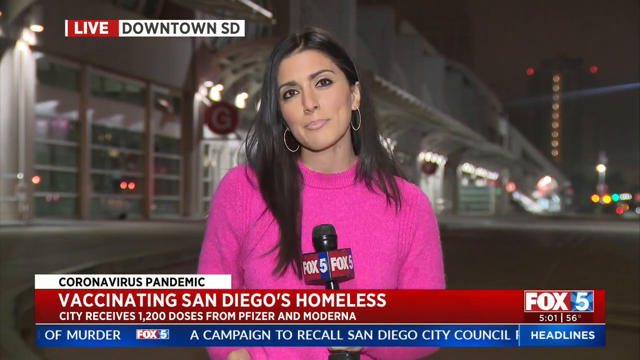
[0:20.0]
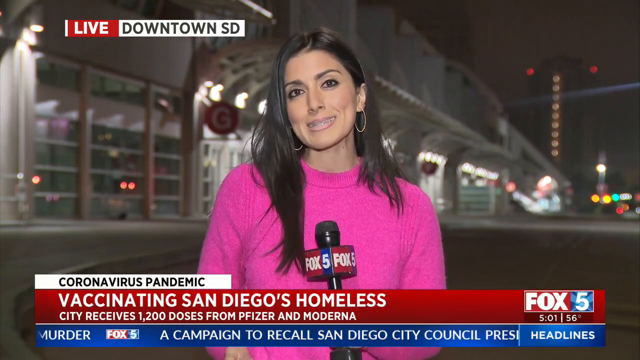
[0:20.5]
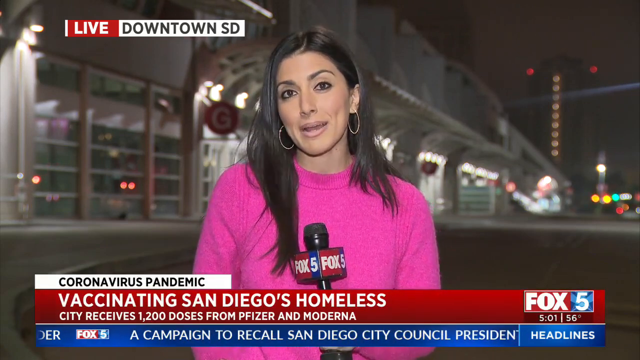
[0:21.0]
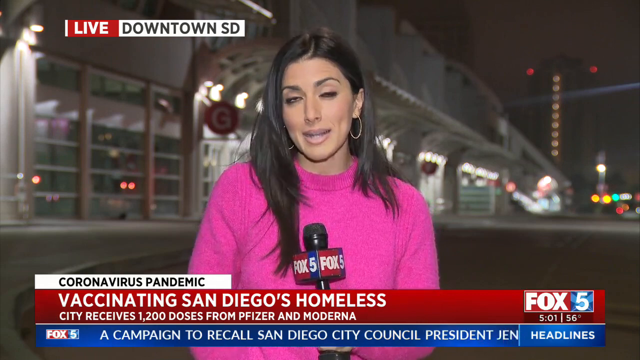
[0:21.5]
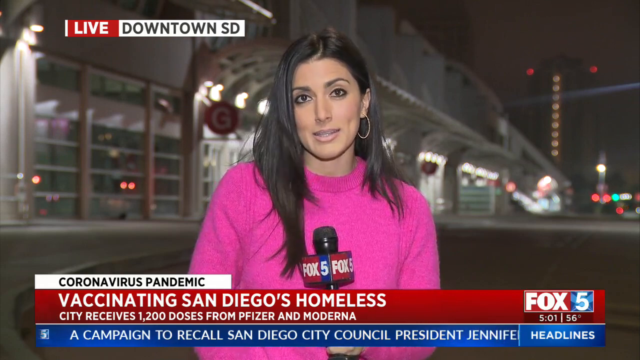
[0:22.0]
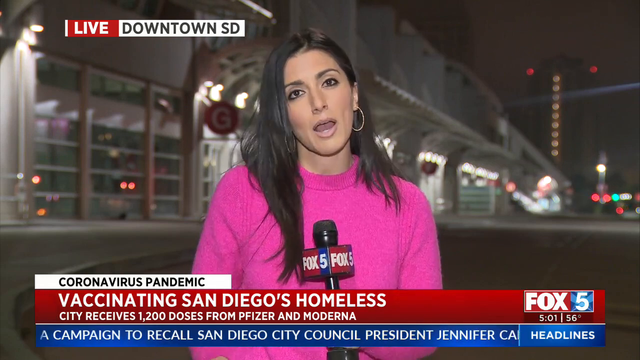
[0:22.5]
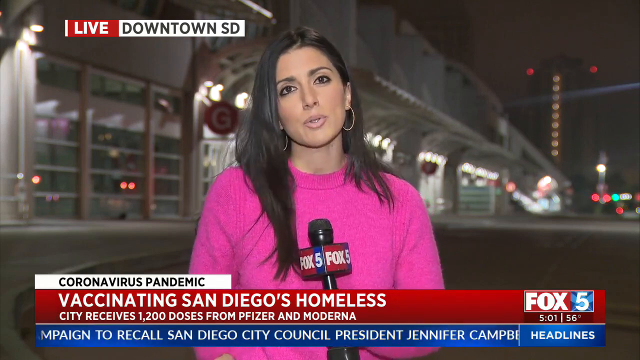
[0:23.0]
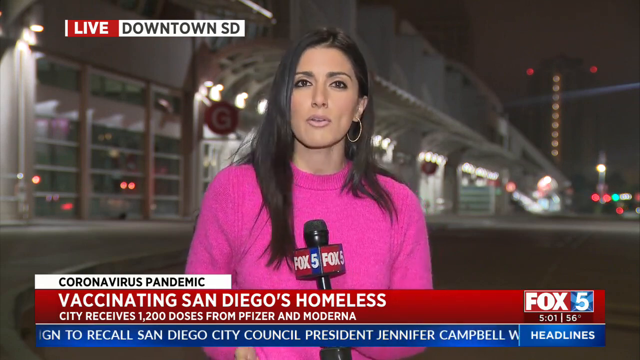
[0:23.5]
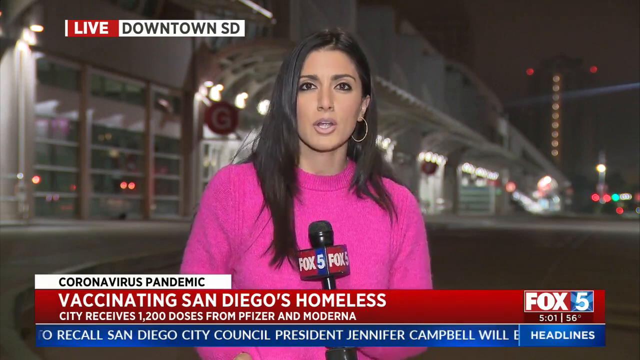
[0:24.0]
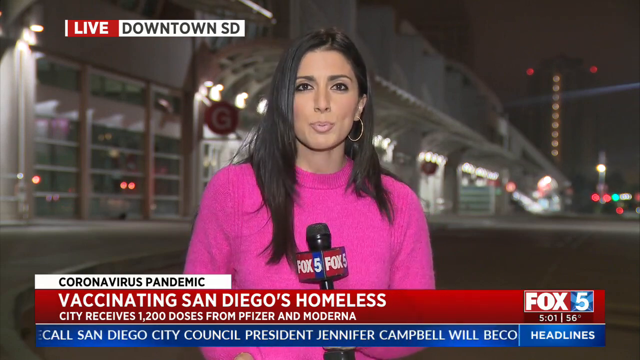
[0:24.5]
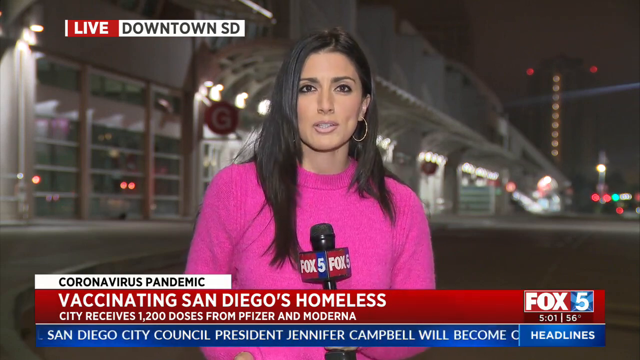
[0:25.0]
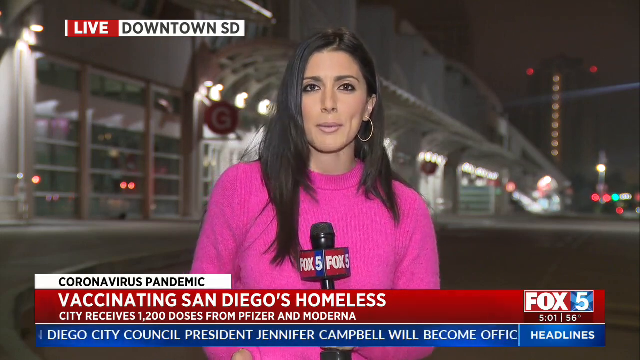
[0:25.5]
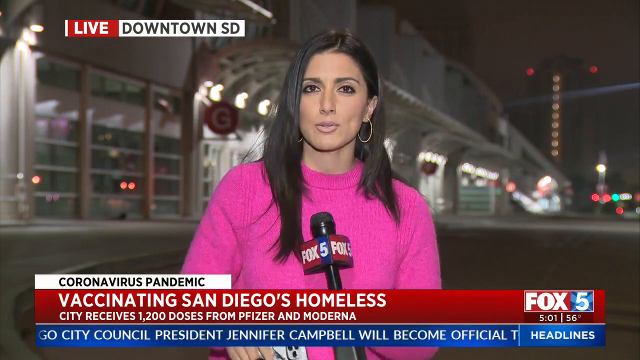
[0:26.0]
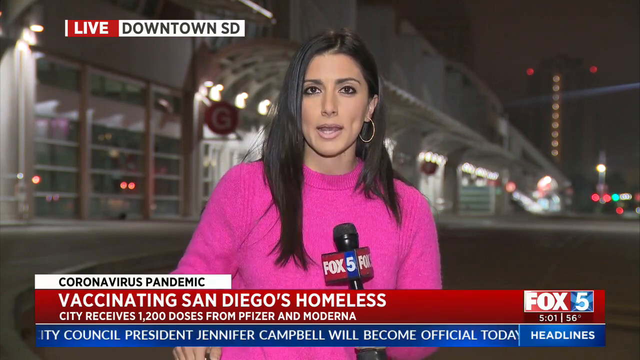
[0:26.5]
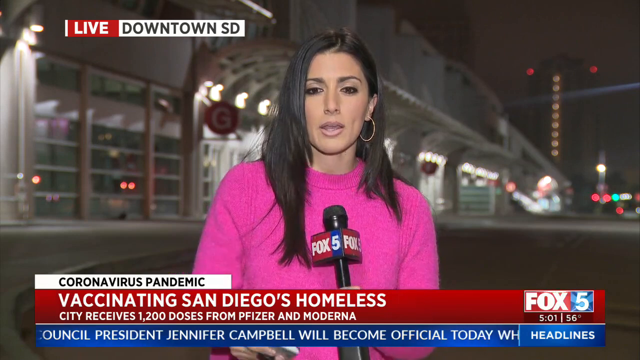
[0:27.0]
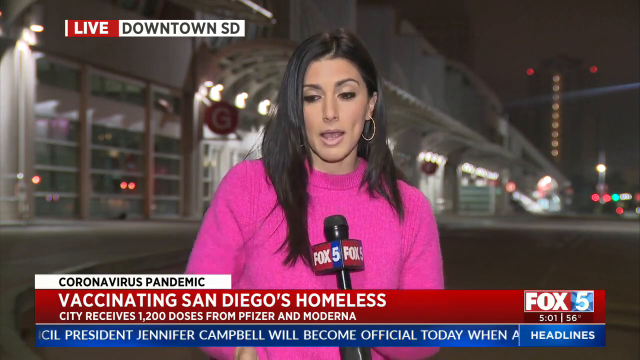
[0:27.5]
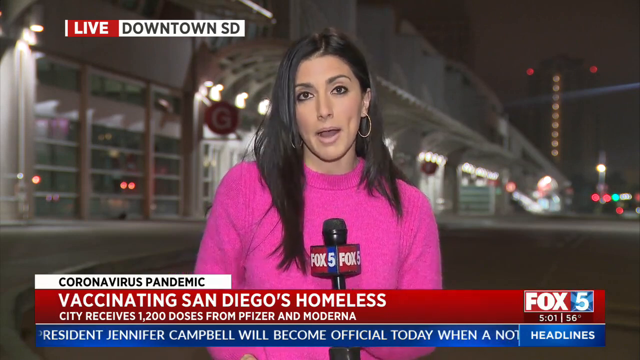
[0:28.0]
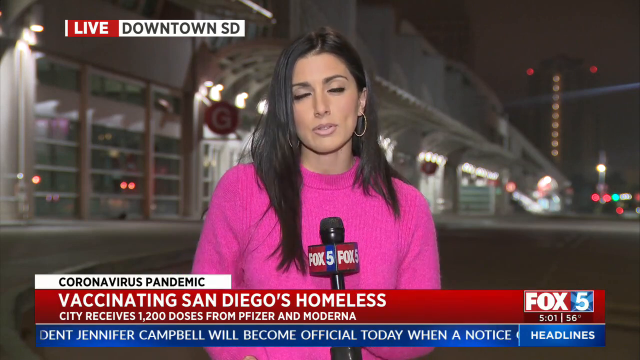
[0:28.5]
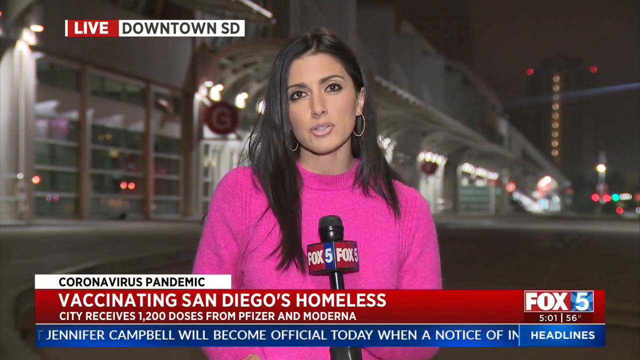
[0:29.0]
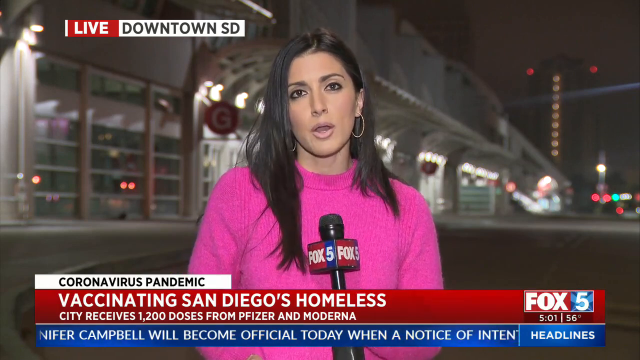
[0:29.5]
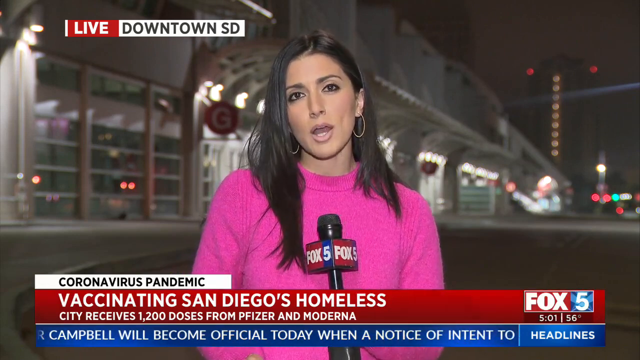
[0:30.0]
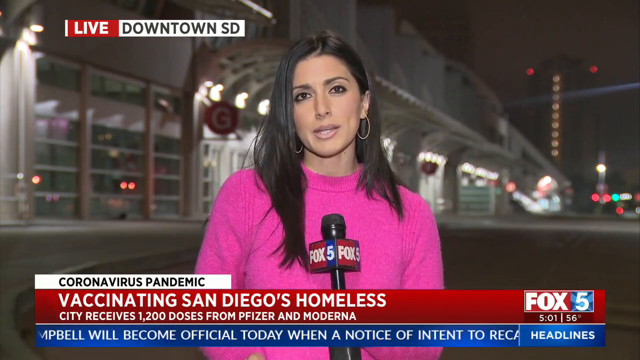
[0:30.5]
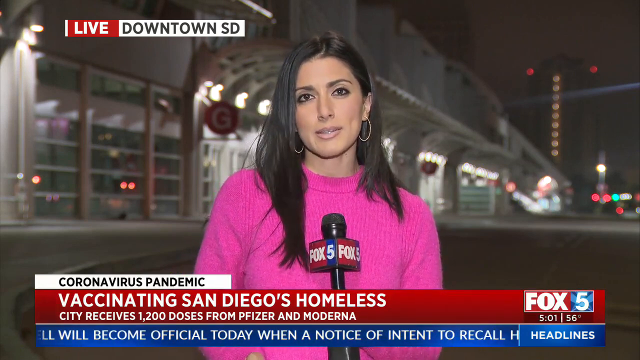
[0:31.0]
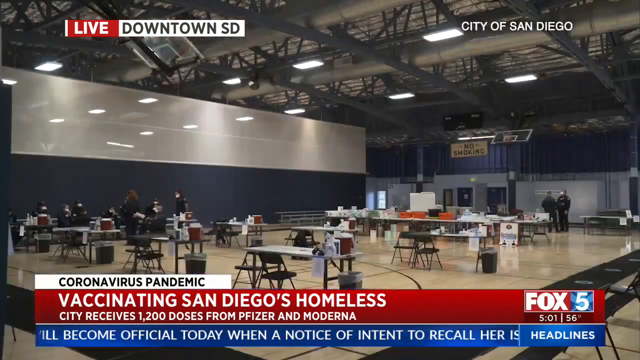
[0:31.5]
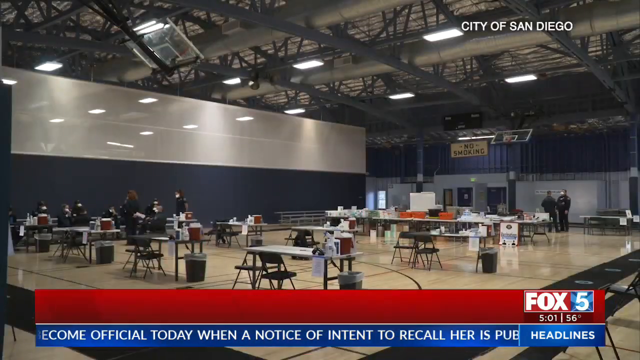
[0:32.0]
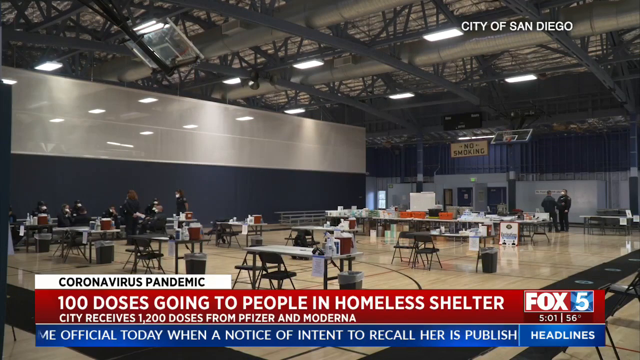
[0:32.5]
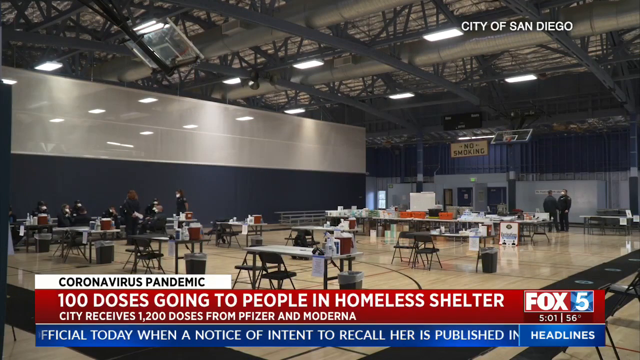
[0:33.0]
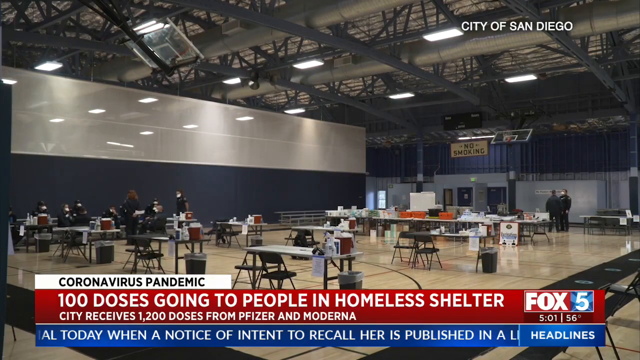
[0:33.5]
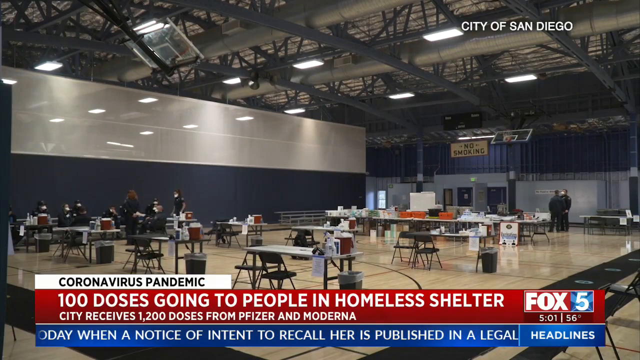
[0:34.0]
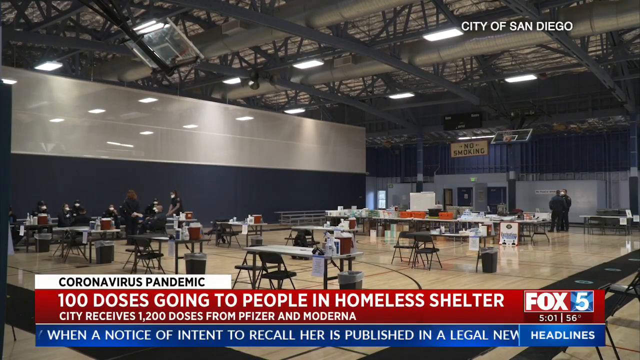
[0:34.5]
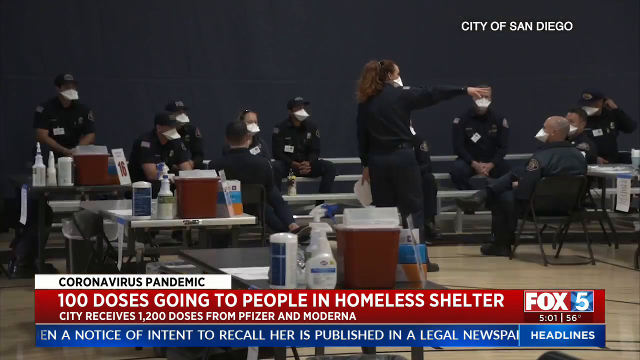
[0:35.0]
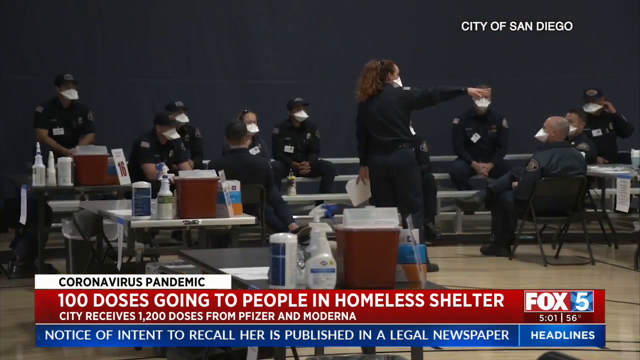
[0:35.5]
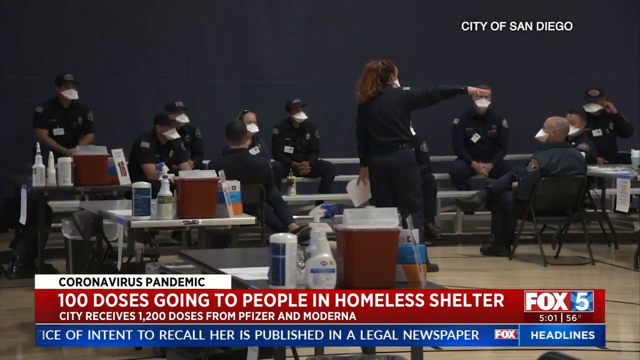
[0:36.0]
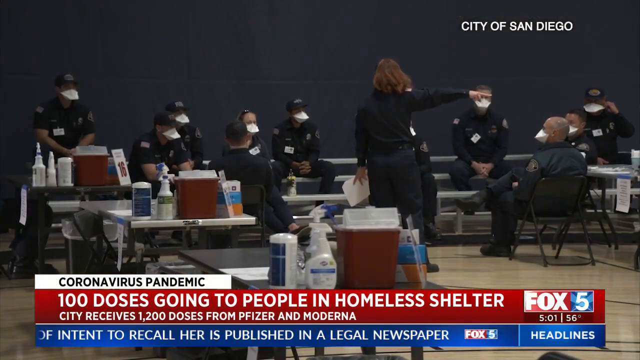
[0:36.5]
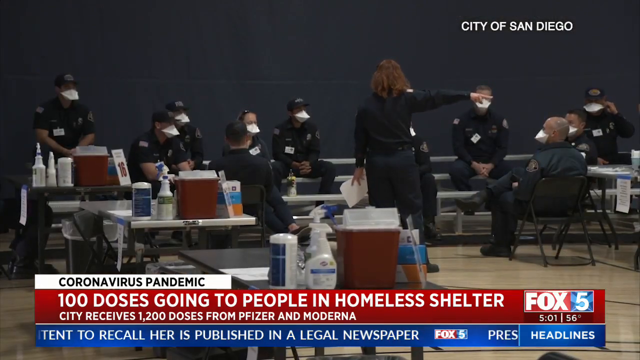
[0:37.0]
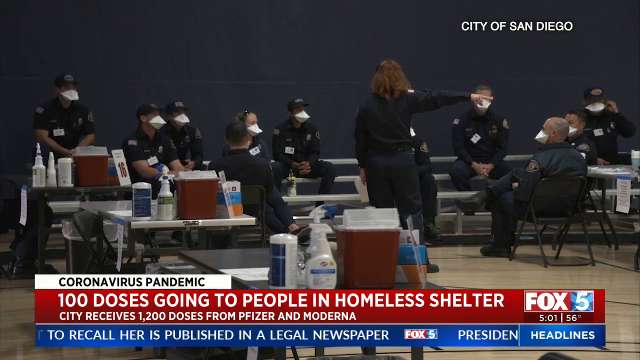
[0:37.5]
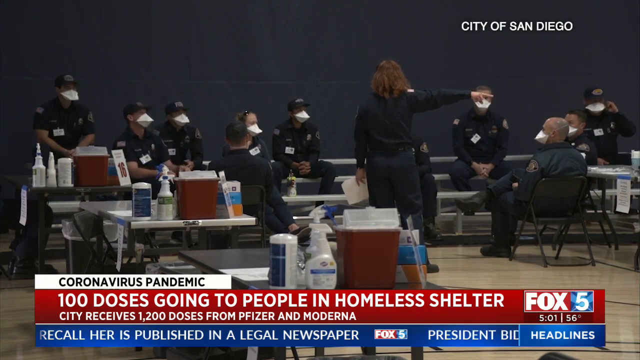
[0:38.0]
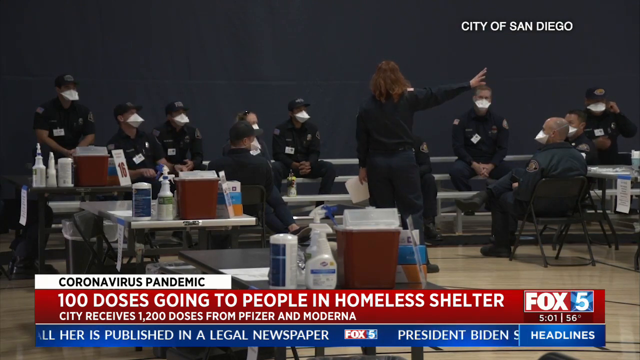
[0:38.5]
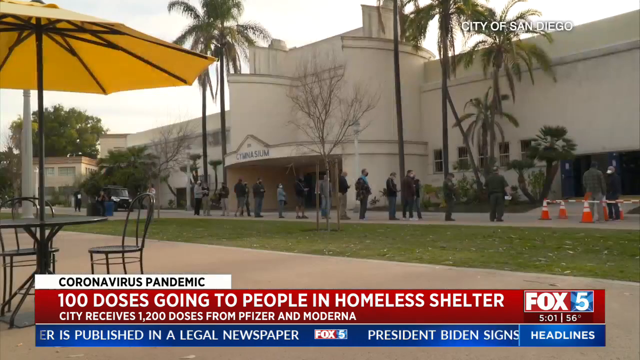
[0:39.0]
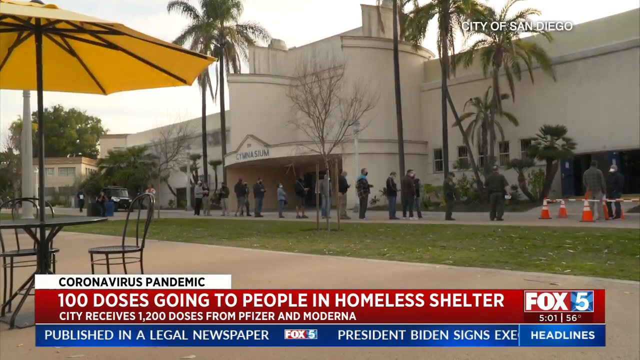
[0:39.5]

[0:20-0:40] Jacqueline is still reporting from downtown, and new words appear on the screen: "city receives 1,200 doses from Pfizer and Moderna", about a vaccination effort in San Diego centered around the homeless. The image then switches to the inside of some sort of building, which appears to be a hall, where tables have been set a few feet apart. Various items are on a table, some of which appear to be sanitizers, and police officials are present. Next, the outside of the building is shown with words on the screen identifying it as "city of San Diego", and a group of people stand a few feet apart in a queue on their way to get their vaccinations.